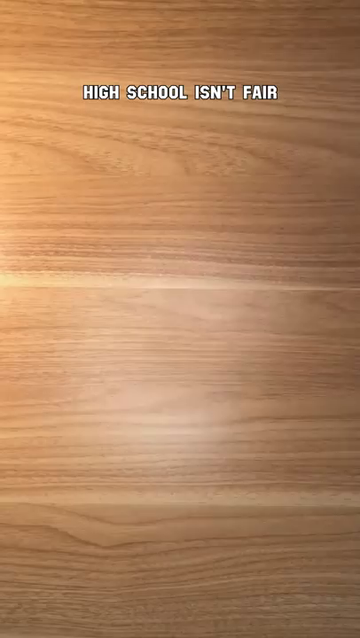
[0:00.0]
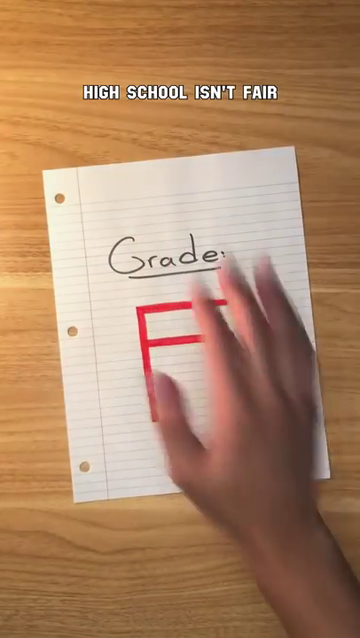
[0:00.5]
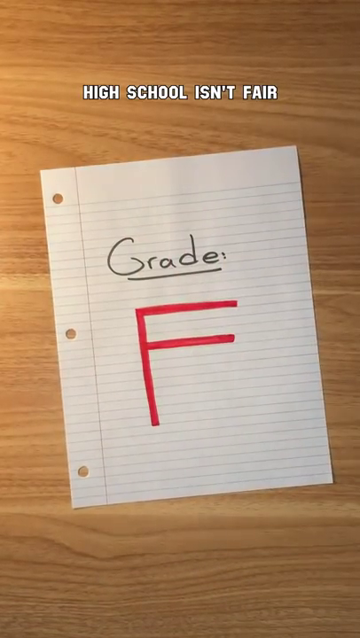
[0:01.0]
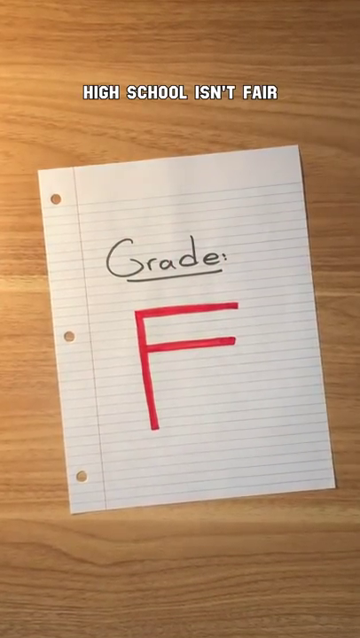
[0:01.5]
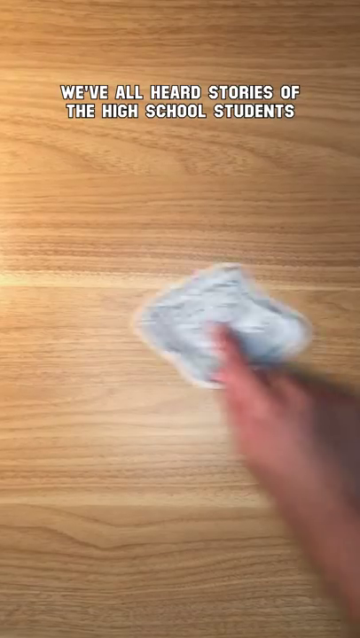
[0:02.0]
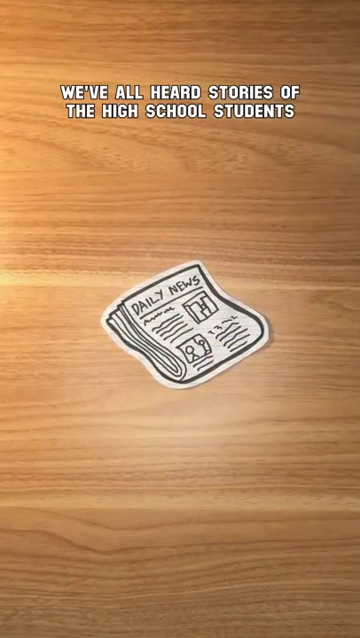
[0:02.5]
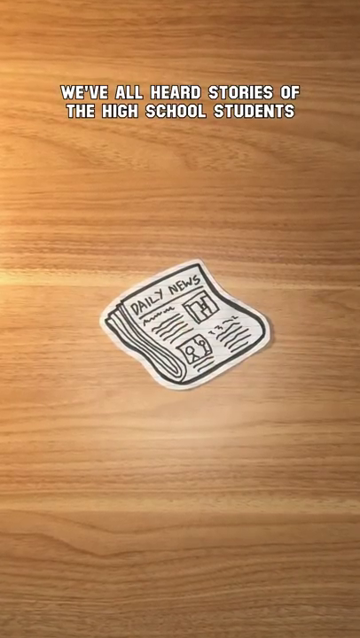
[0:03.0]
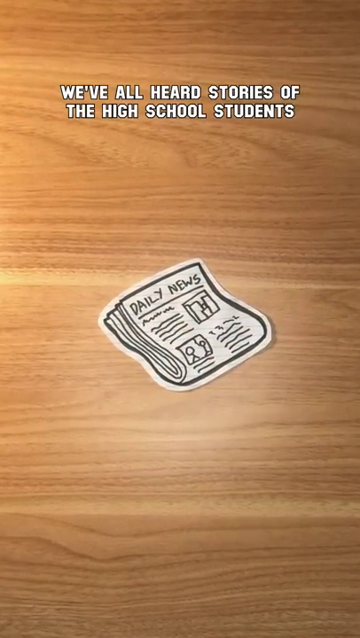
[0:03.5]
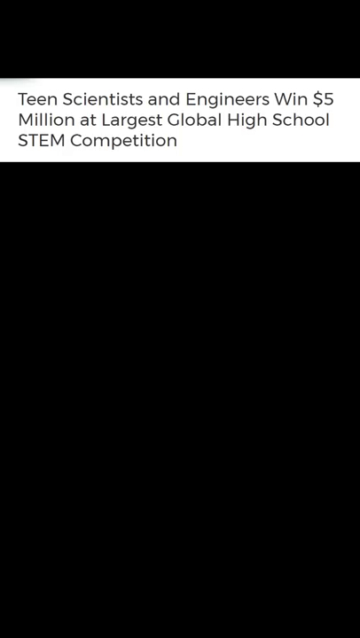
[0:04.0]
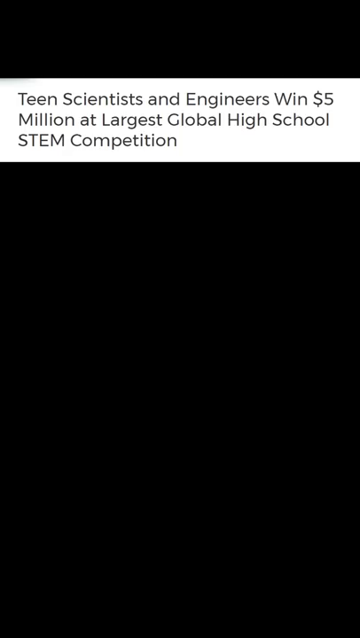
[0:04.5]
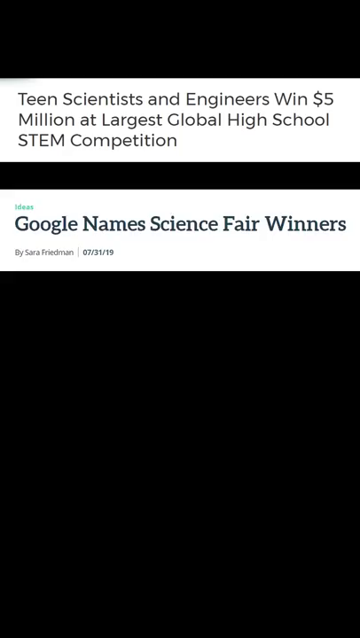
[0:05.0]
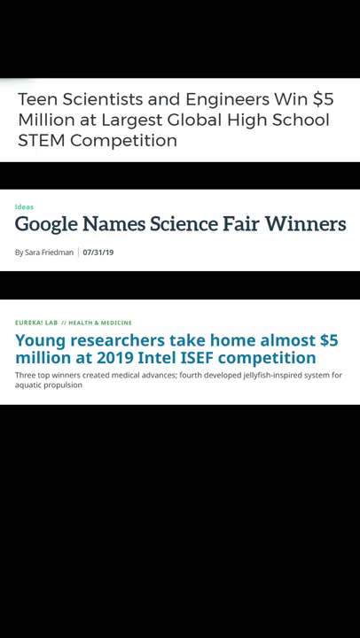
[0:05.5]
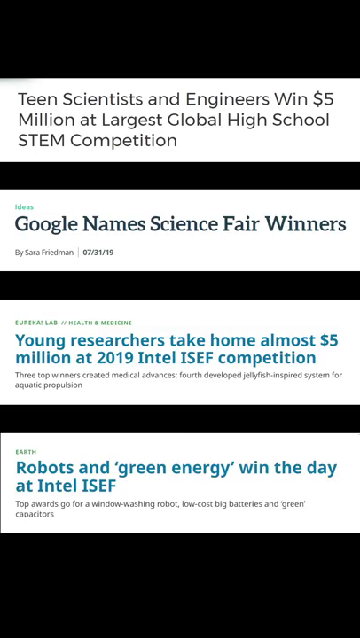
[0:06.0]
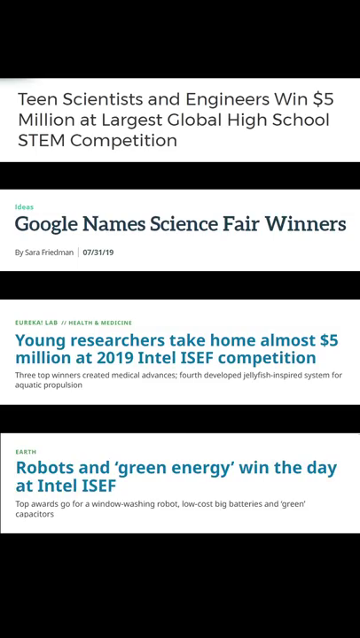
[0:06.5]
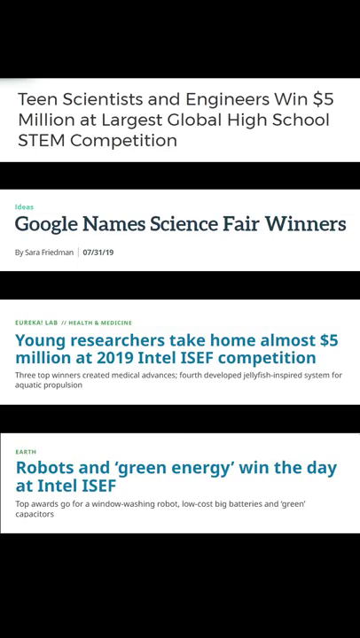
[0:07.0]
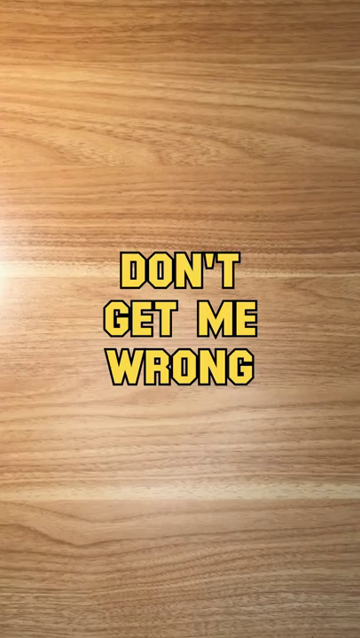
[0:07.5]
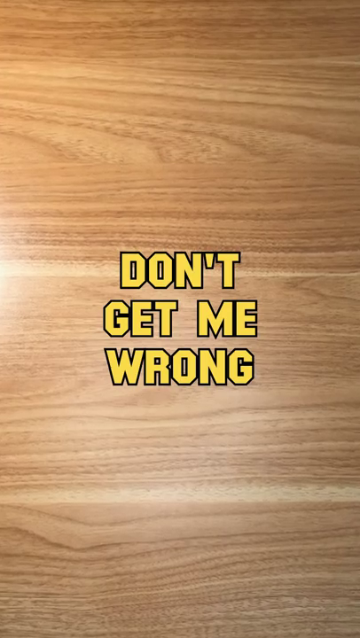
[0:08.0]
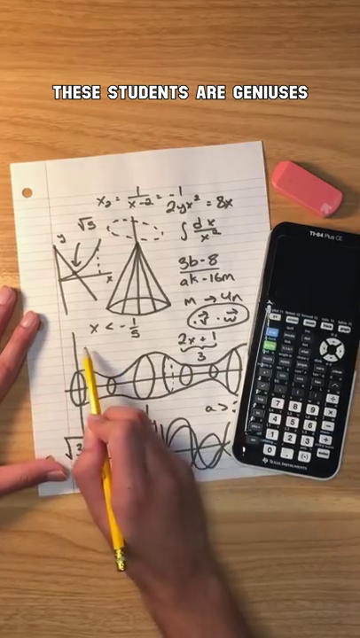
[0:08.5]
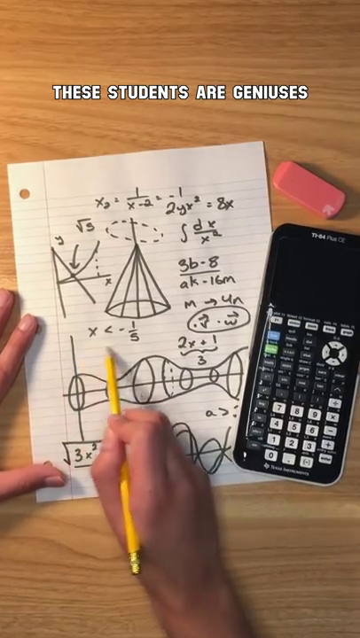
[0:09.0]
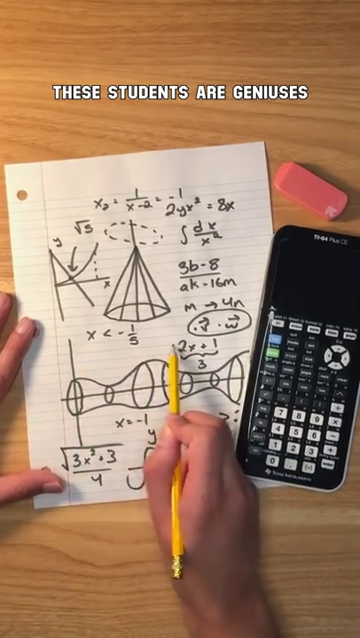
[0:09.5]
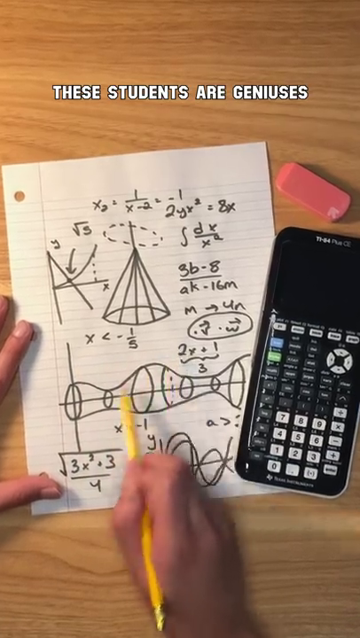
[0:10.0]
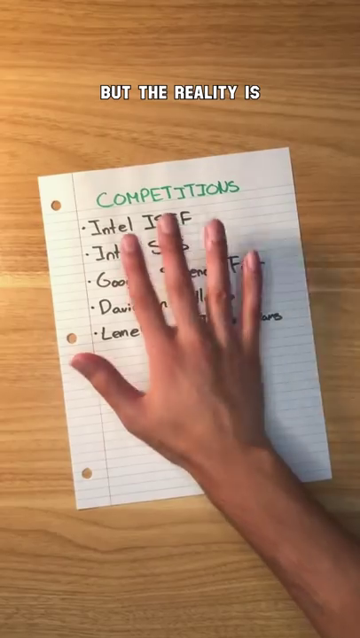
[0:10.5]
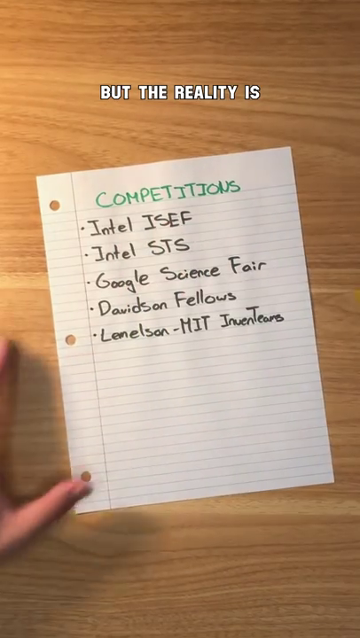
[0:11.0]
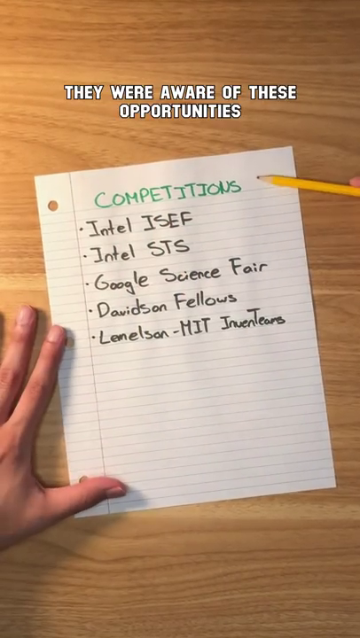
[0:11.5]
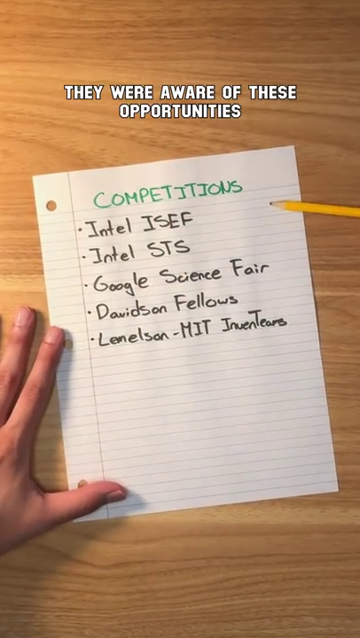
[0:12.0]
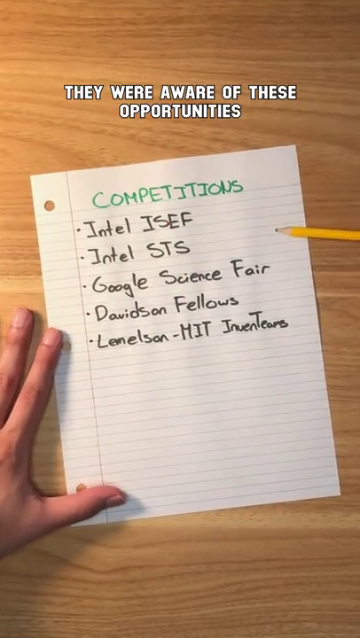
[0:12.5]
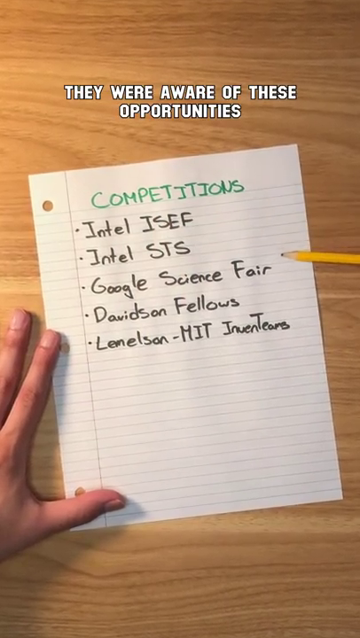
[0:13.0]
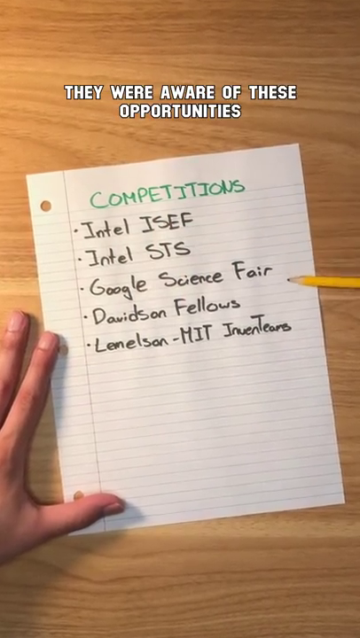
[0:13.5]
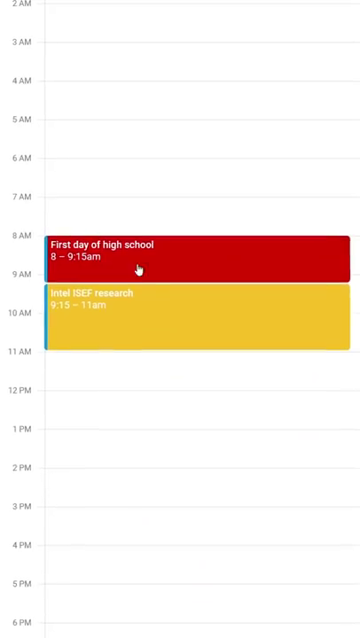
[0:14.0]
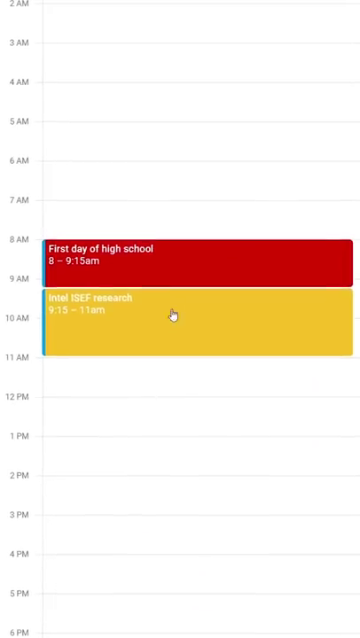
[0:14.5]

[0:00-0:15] The video opens on a wooden desk, where somebody slaps down a paper with a grade F on it, and text at the top reads "high school isn't fair." Next, somebody slides a kind of cartoonish newspaper onto the screen, and the text reads "we've all heard stories of the high school students." Headlines then appear on a black background: "team scientists and engineers win $5 million at largest global high school STEM competition," "Google name science fair winners," "young researchers take home almost $5 million at 2019 Intel ISEF competition," and finally "robots and green energy win a day at Intel ISEF." The view goes back to the school desk, where big, bold yellow words read "don't get me wrong." The white hands that have been putting things on the desk appear, and big white letters at the top read "these students are geniuses." A piece of paper is shown while the hand holds a yellow pencil; the person has drawn a lot of physics diagrams and equations, and there are a mathematical calculator and an eraser. Bold white letters then show what the reality is, and another paper lists "competitions, Intel ISEF, Intel STS, Google science fair, Davidson fellows, Lemelson, MIT, inventors." Text then shows "they were aware of these opportunities," followed by a planner.